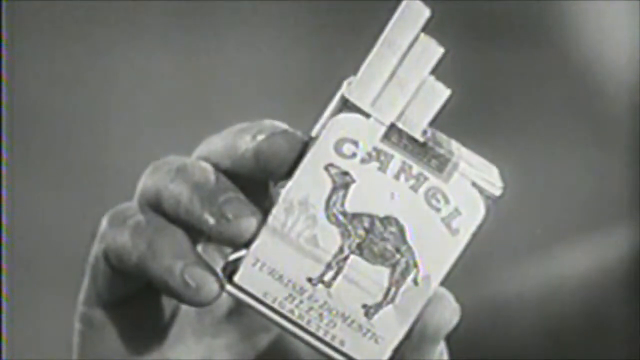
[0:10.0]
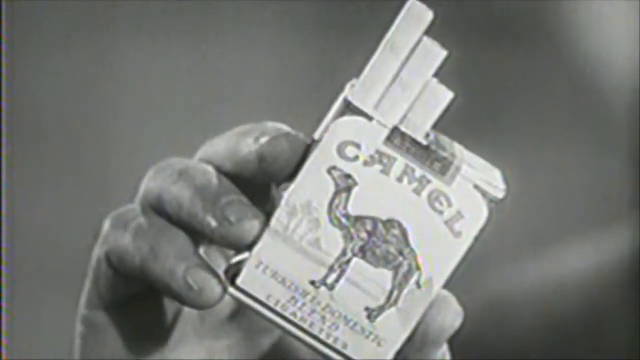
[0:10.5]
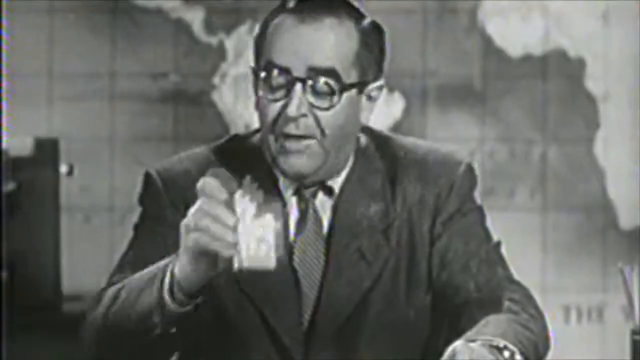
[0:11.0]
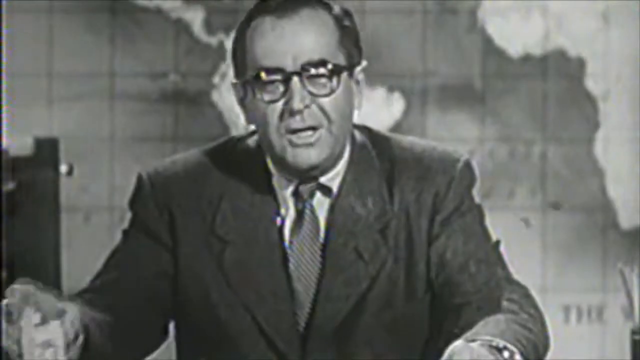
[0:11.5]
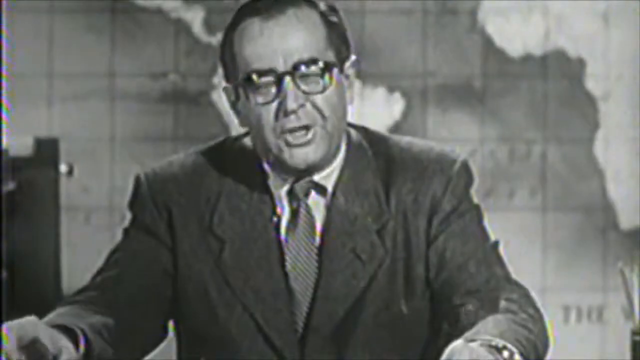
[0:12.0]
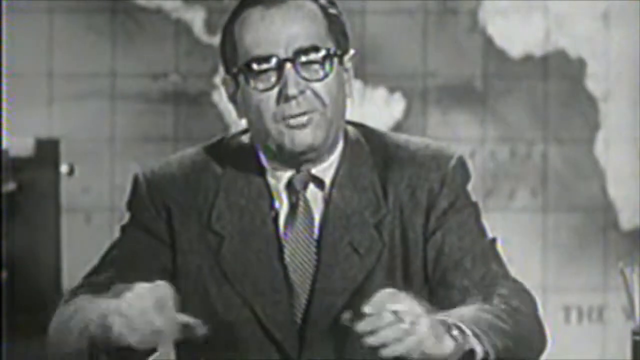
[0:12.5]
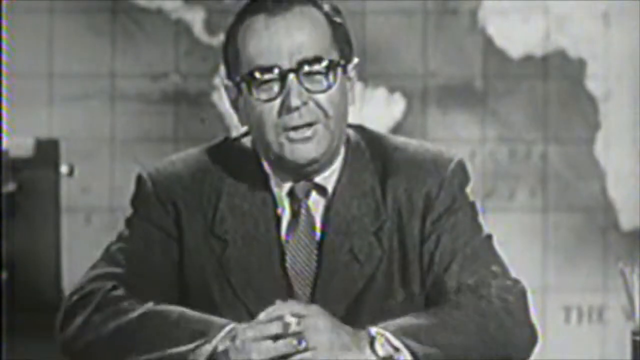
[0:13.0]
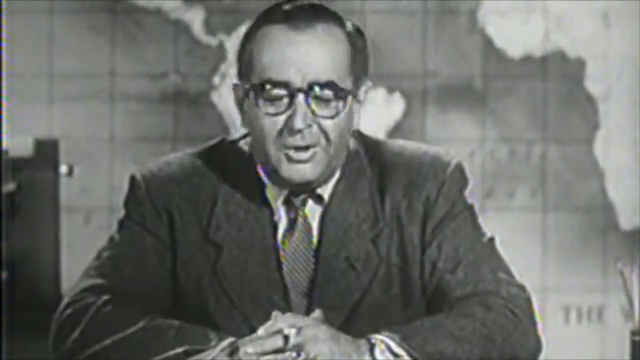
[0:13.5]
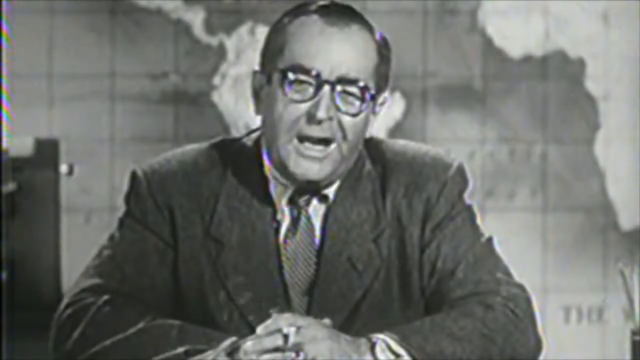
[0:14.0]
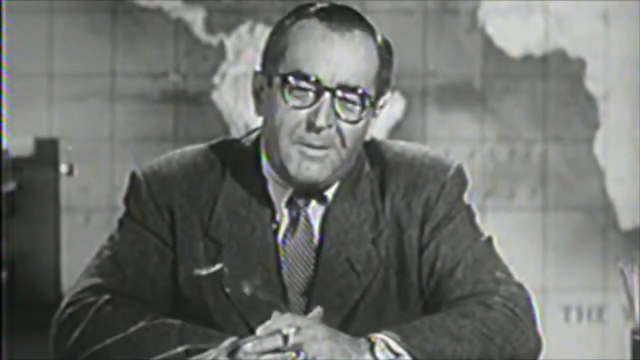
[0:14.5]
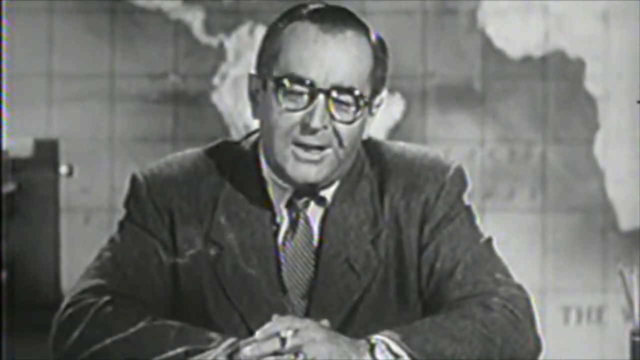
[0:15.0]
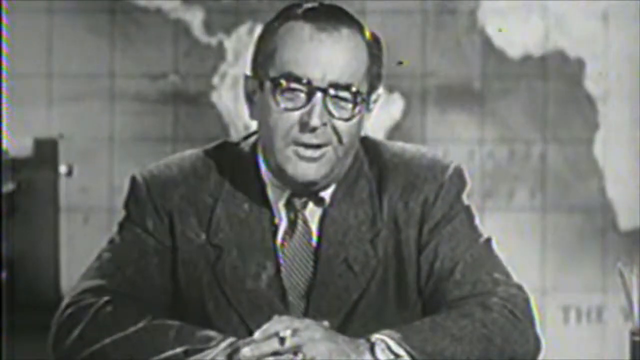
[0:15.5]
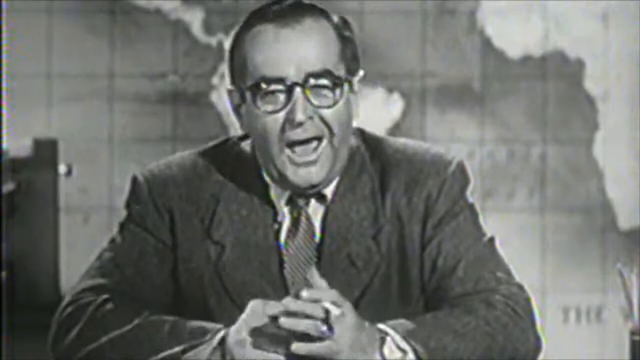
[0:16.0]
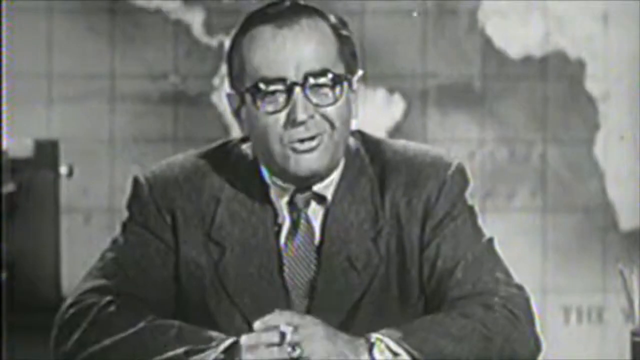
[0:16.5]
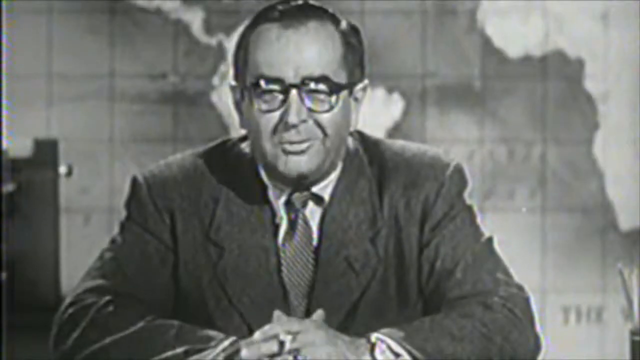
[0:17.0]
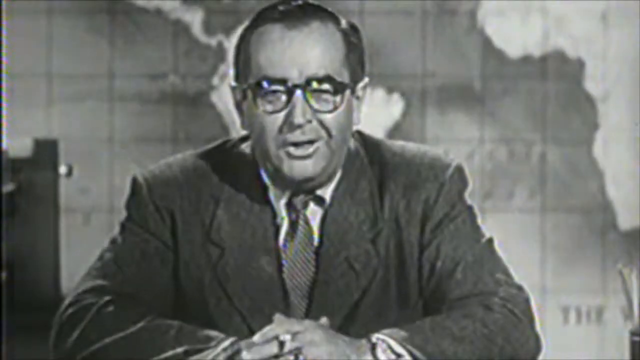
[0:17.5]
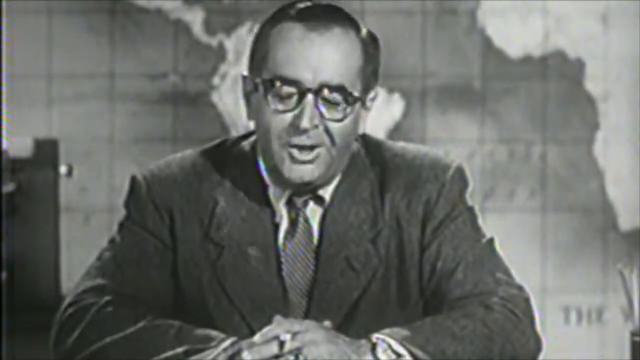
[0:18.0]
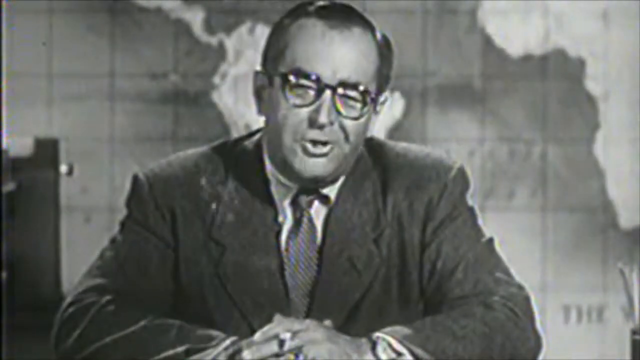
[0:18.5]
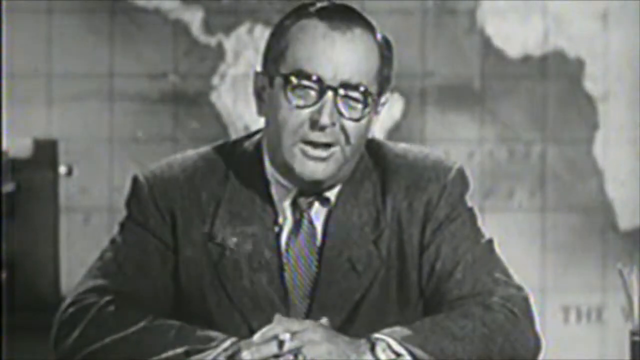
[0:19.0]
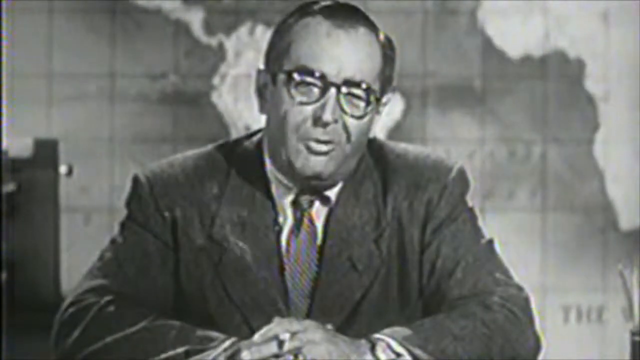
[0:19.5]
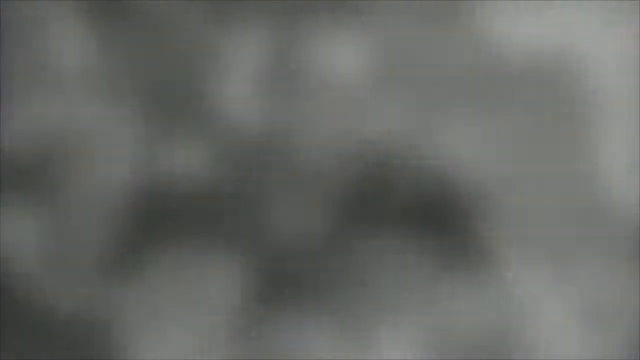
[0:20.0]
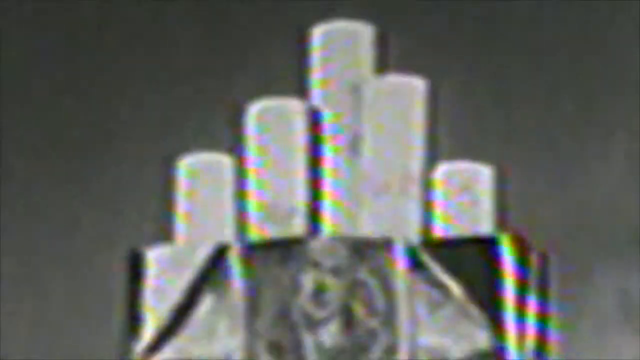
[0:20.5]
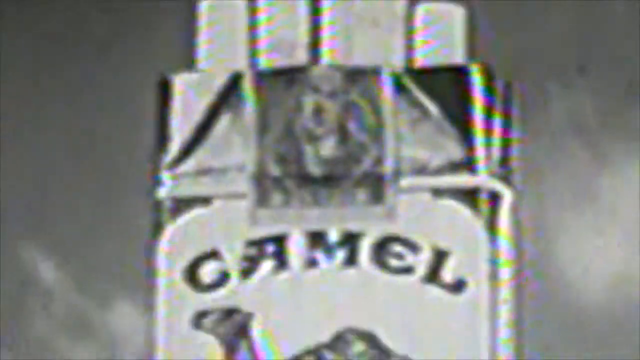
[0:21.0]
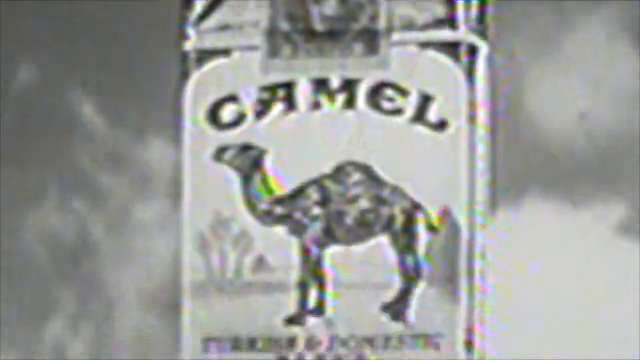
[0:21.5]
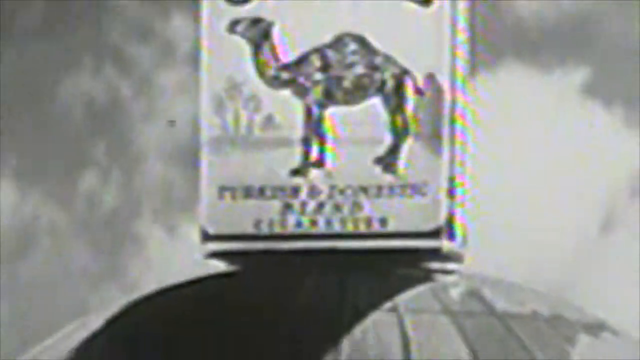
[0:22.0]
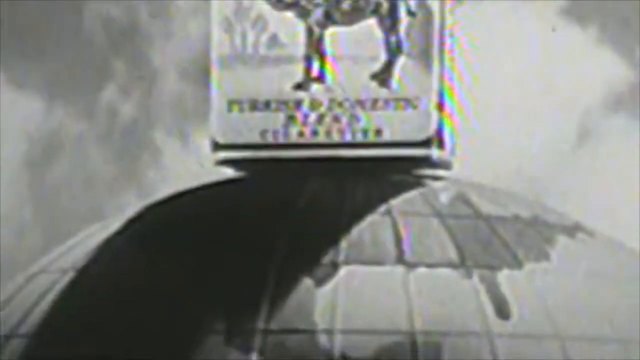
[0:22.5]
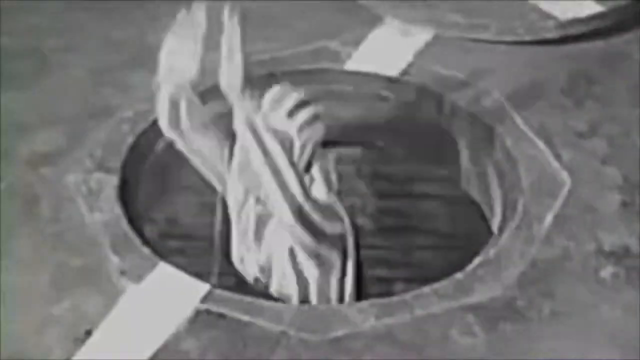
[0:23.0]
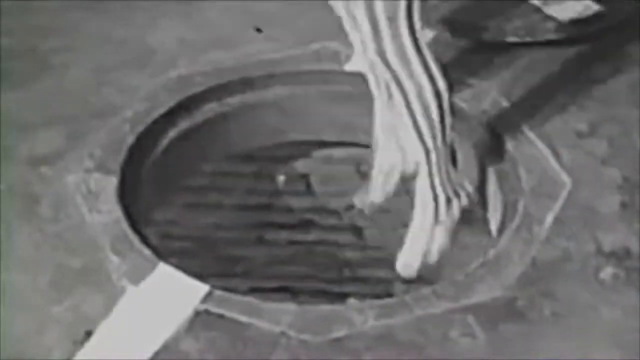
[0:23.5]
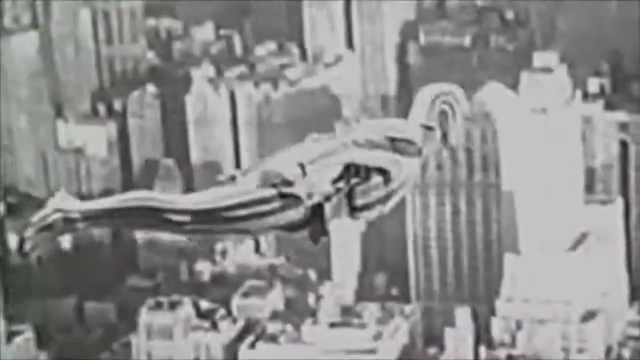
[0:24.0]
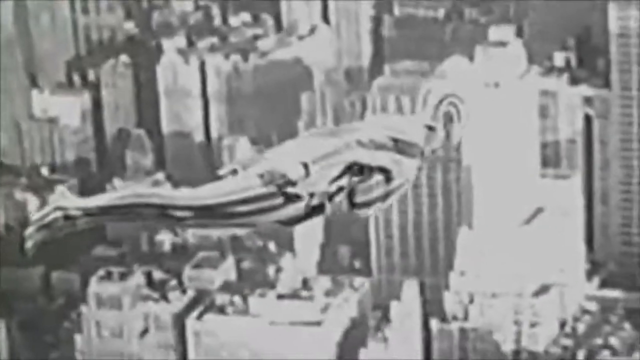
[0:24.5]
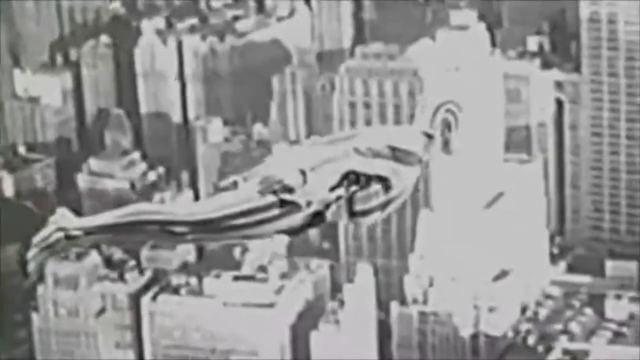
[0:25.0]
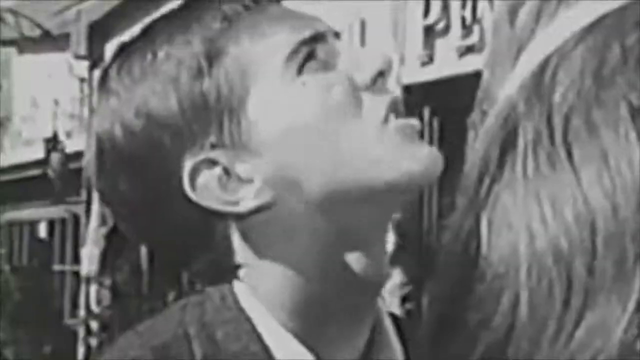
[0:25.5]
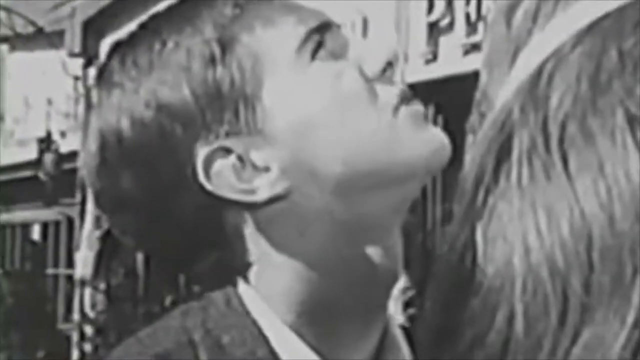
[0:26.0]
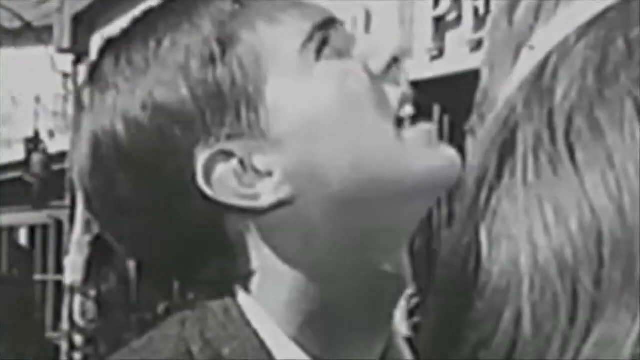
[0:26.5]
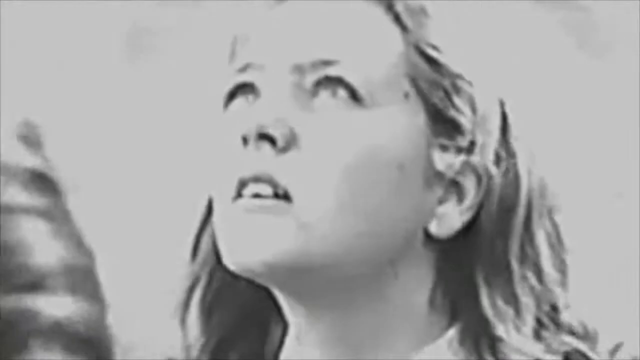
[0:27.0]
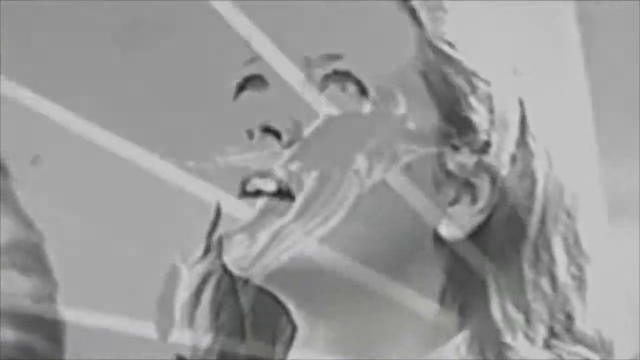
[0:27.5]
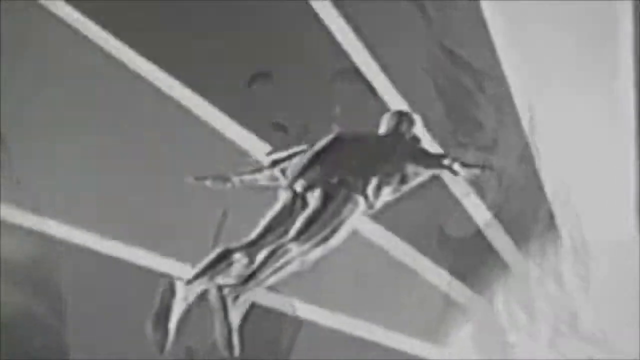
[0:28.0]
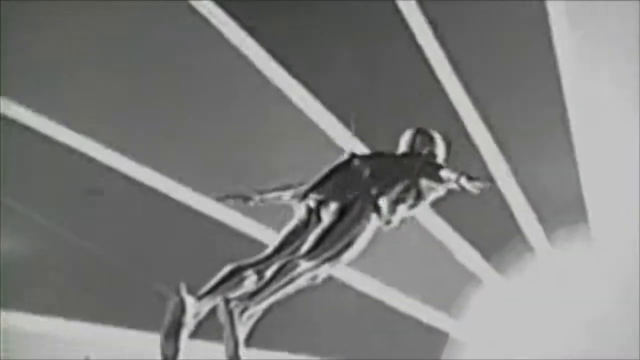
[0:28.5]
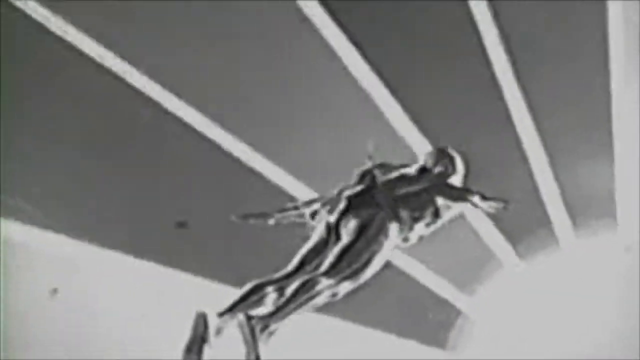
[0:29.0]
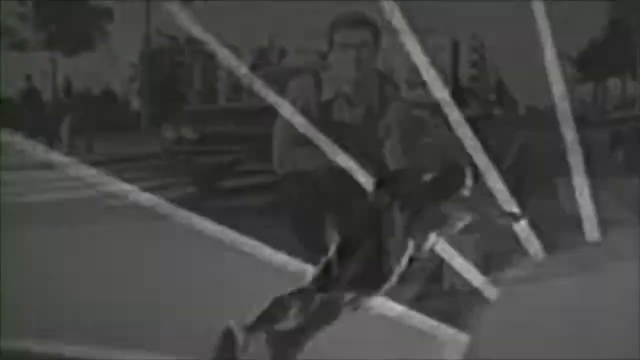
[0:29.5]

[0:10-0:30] A close-up shows a soft pack of Camels cigarettes with three cigarettes sticking up at the top, held in the right hand of a middle-aged white man in this 1950s television commercial. The man wears a gray suit; he smokes a cigarette, talks to the camera and moves his head back and forth. The pack of Camels cigarettes is then shown sitting on top of a globe in the black-and-white commercial. Next, a man in a bright chrome-colored suit flies through the air over a city as people on the street look up at him. He descends to street level, and then the man with the pack of Camels cigarettes in his right hand is seen sitting at the desk with a world map behind him, smoking.